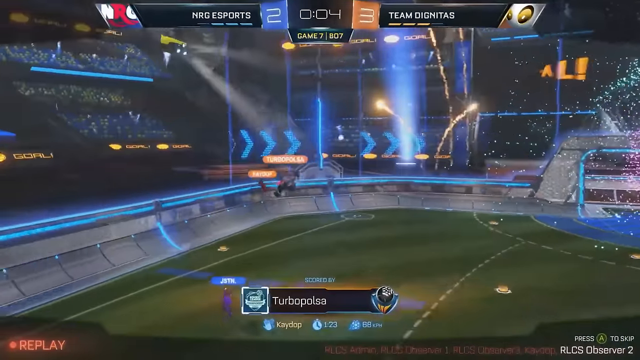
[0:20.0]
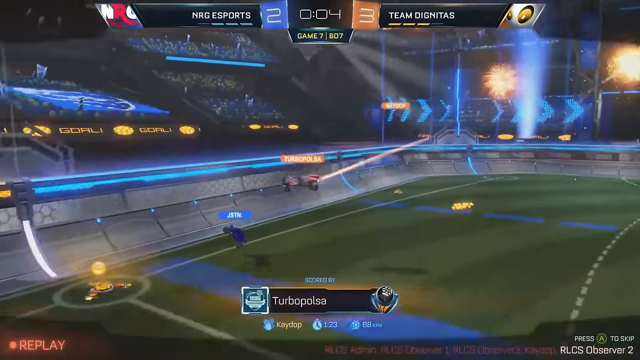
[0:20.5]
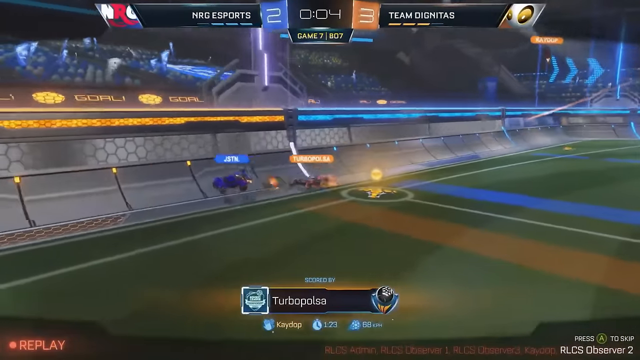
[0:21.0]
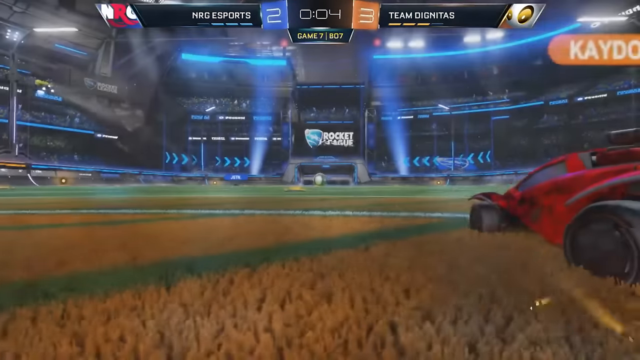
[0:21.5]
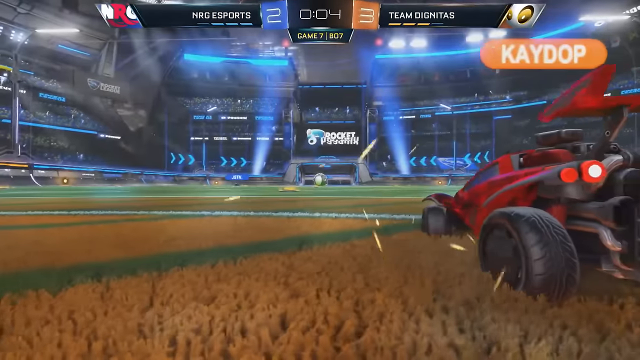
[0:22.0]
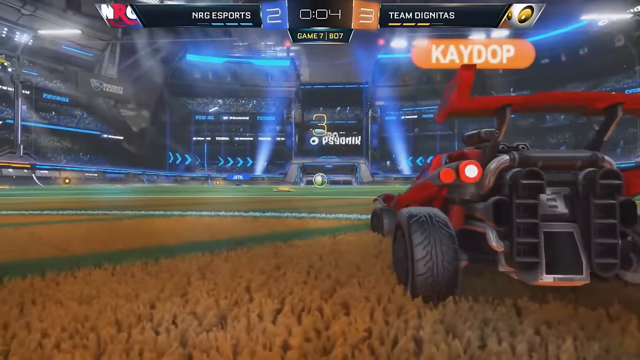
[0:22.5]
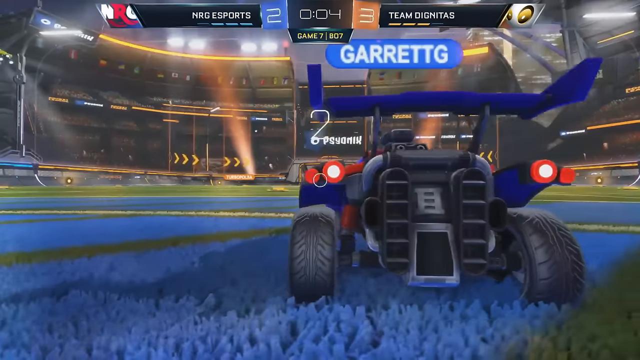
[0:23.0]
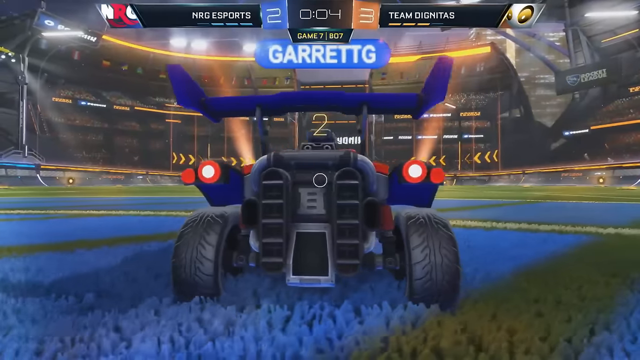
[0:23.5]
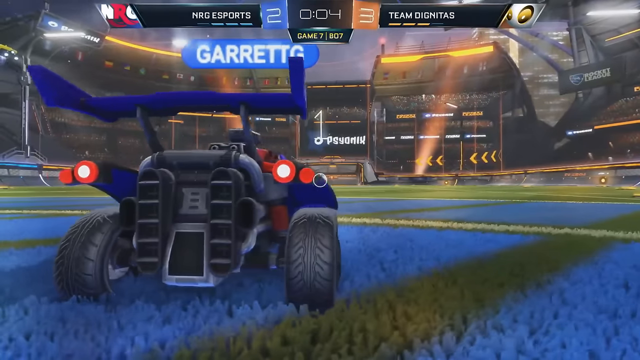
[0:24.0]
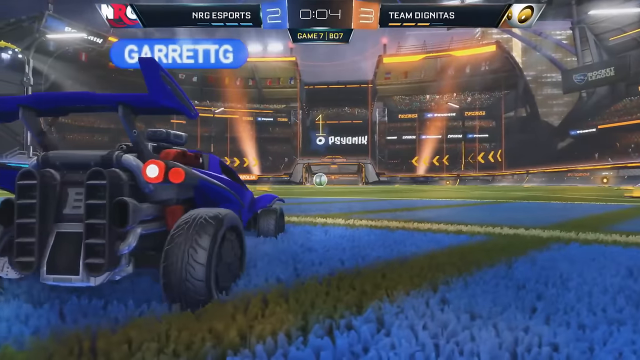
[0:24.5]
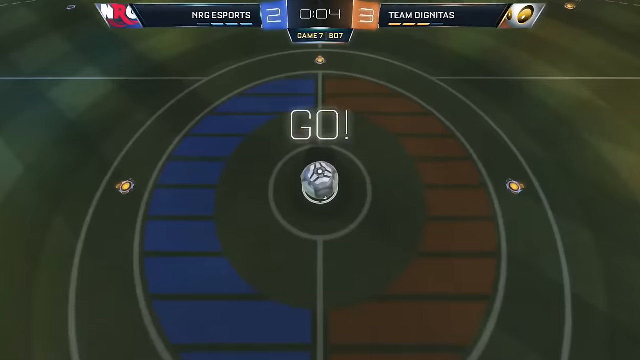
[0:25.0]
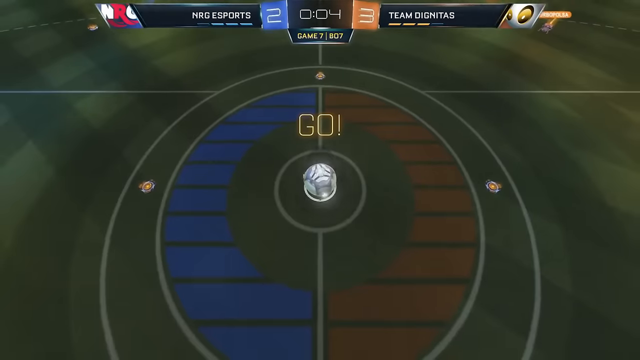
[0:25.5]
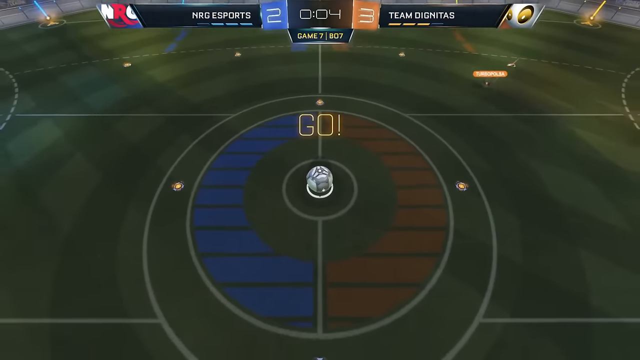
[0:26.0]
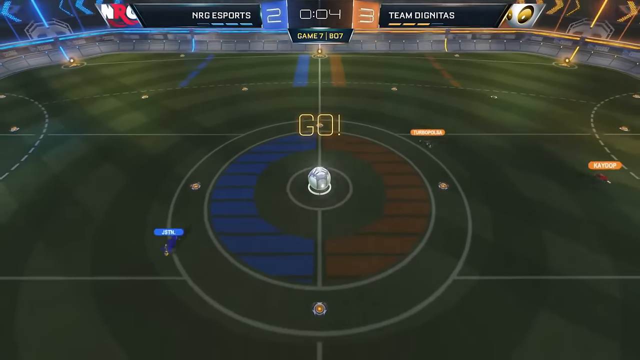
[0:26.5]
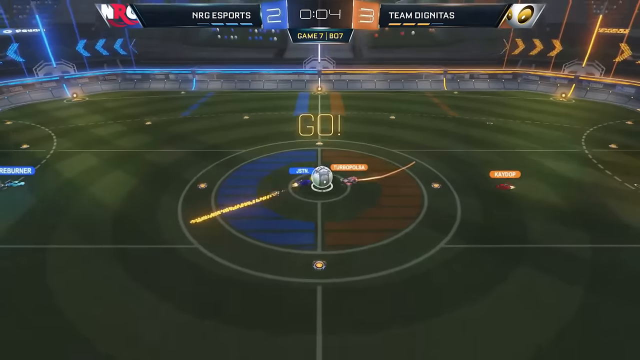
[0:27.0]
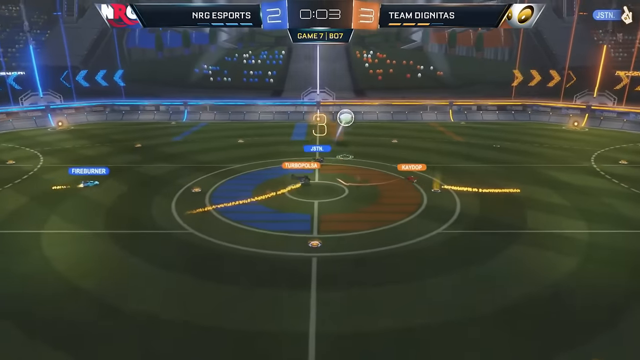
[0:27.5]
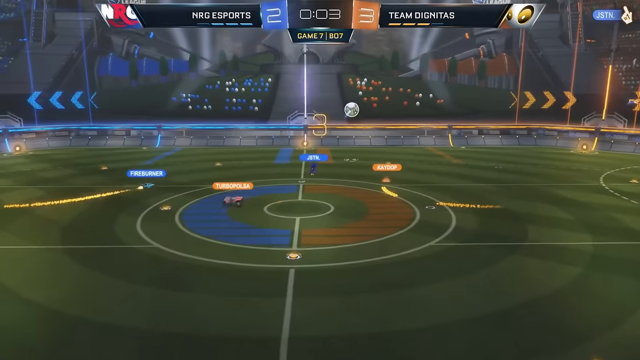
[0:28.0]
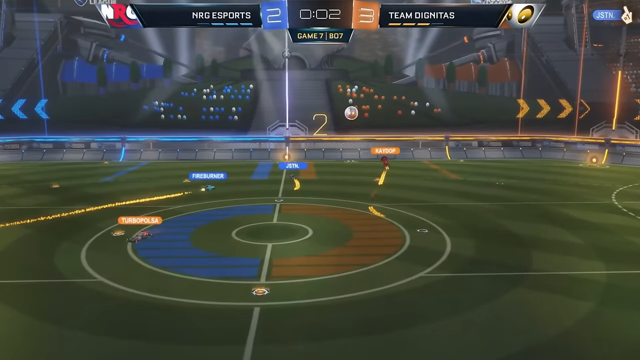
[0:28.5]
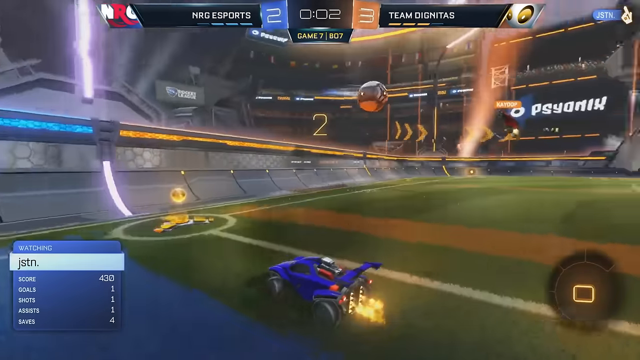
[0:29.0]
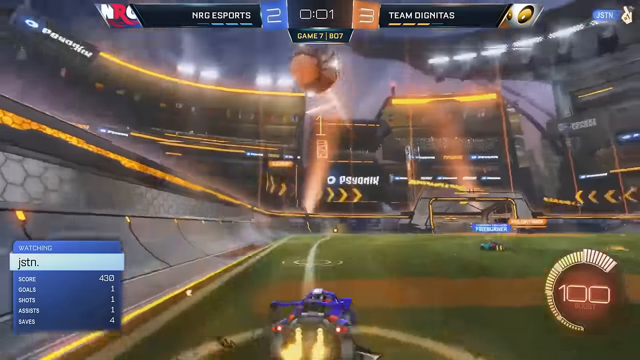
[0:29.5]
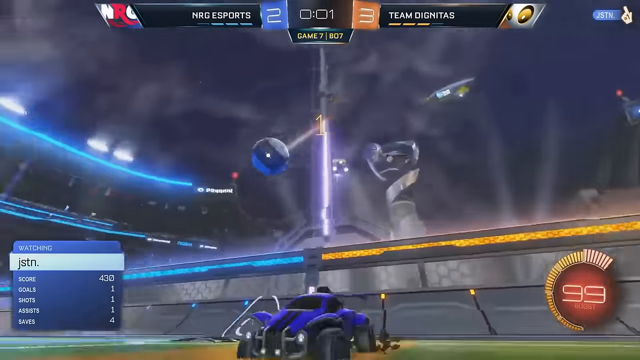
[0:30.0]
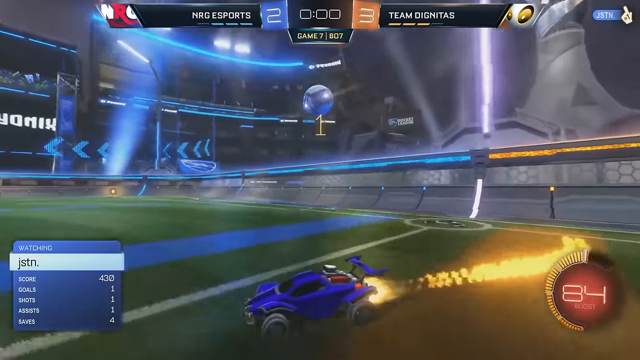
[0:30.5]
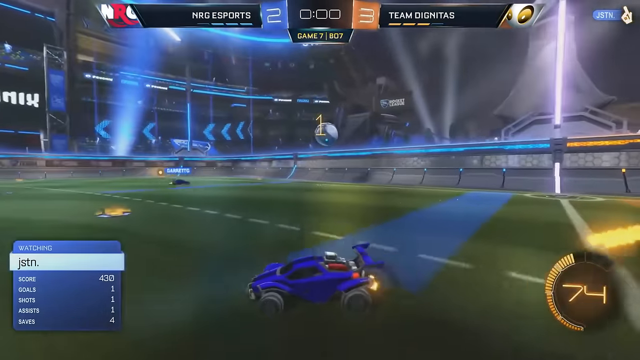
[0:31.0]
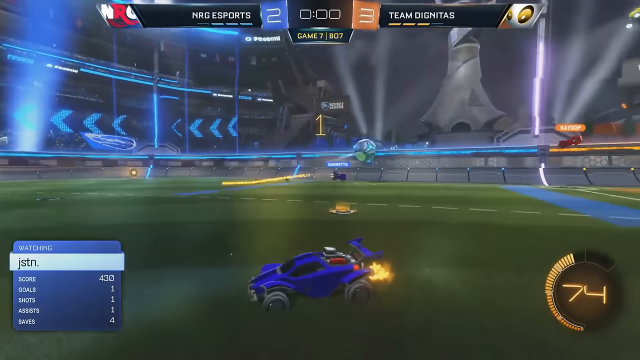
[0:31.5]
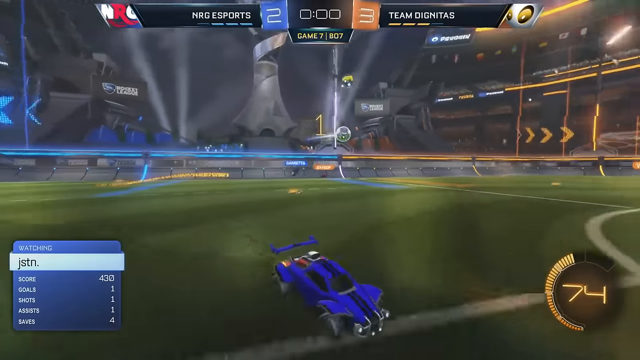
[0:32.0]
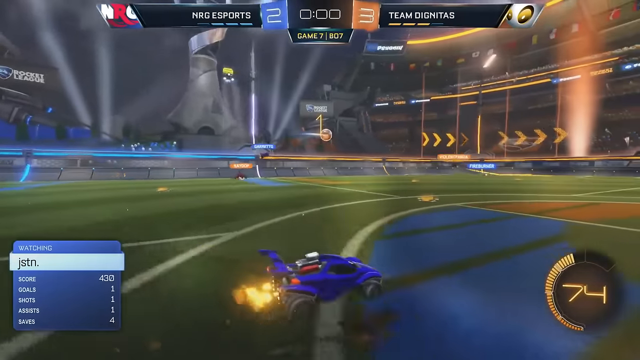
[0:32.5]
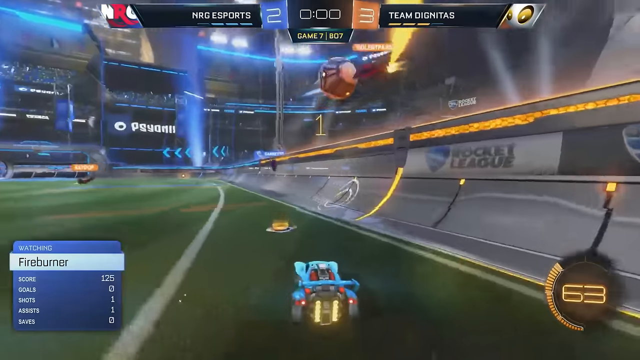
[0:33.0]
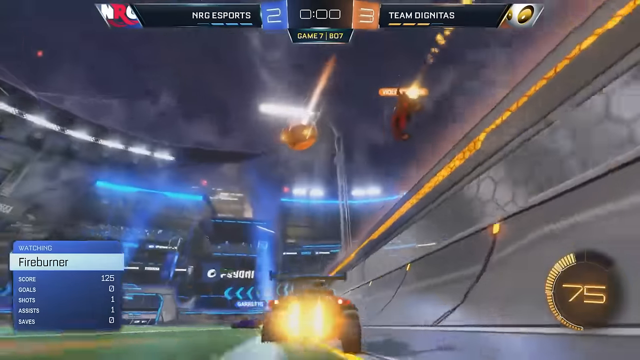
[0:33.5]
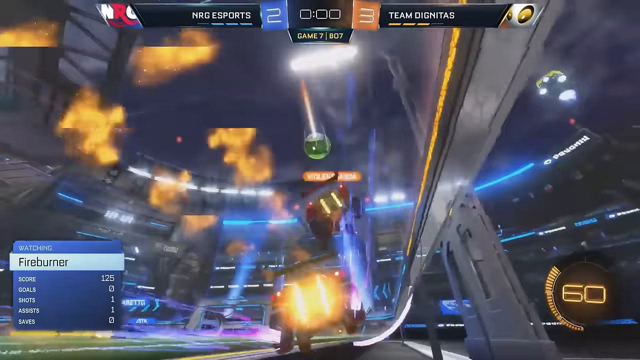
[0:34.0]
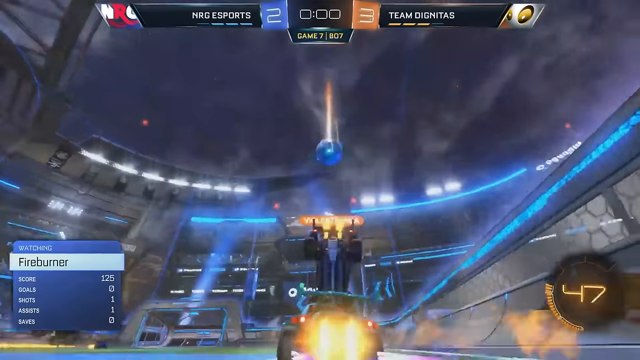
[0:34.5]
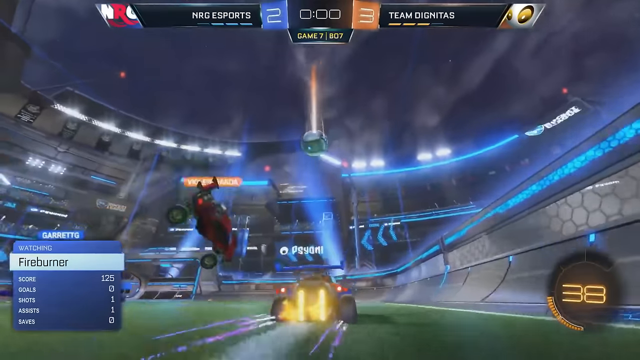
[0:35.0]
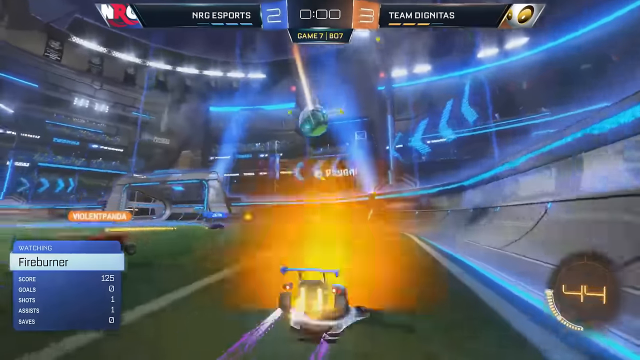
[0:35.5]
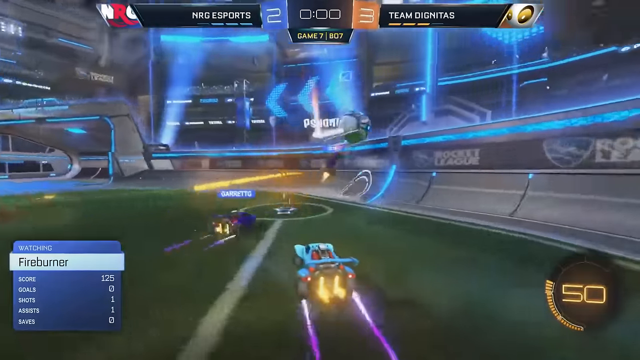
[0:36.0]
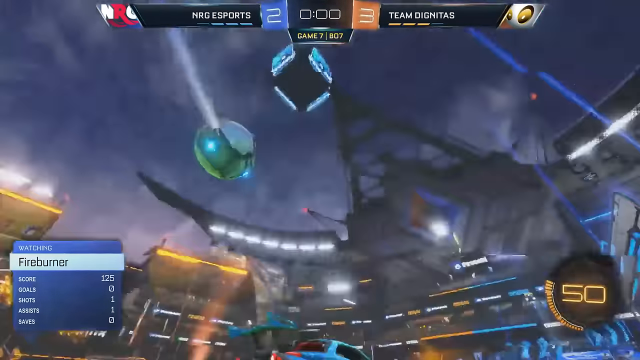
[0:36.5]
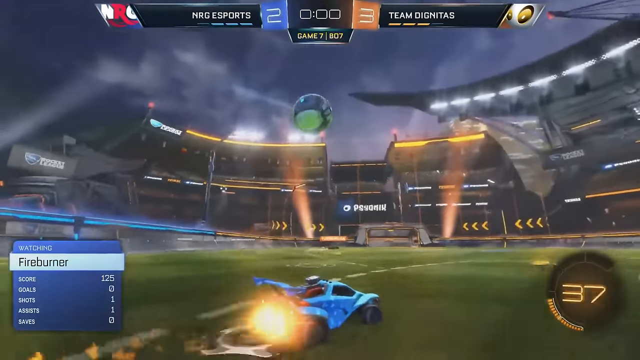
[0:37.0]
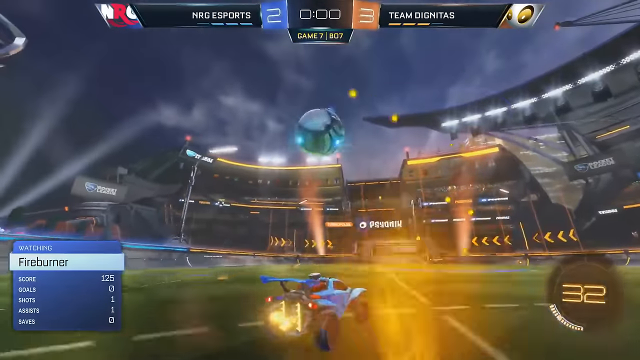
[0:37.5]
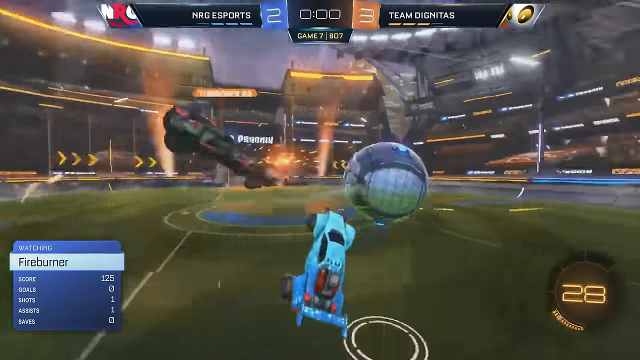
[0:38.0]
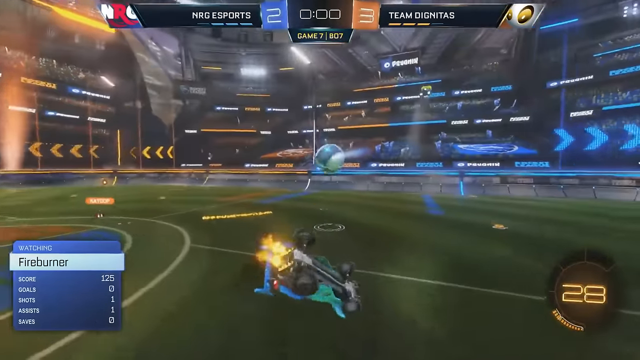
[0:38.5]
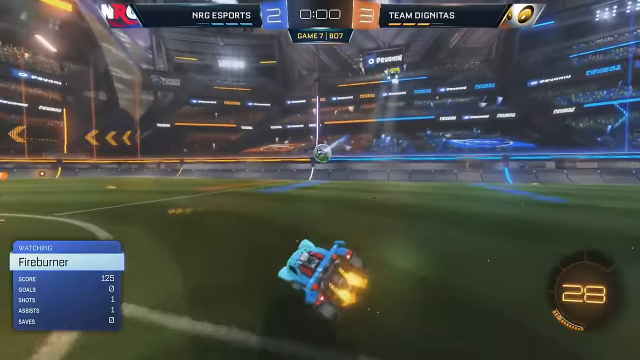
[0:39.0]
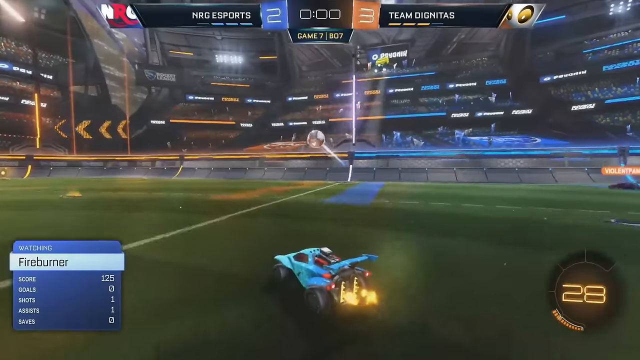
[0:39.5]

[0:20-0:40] The unidentified video game continues on what looks like a futuristic football field, with numerous glowing blue arrows in the background and lots of lights going off. At the bottom, the screen says "Turbo Pulsa." Many cars drive around the playing area with player tags flashing over them, and the cars hit each other. A glowing ball that appears to be in play floats in the air, occasionally hitting different barriers and bouncing around as the cars attempt to hit it. At one point the screen says "go" and then counts down "three two one" while the ball bounces around. The object of the game is unclear. Several cars hit the barriers and tip over, but they right themselves and continue playing. All the vehicles move very quickly, chasing the ball as it floats in the air and occasionally bounces off the ground or the barriers at the side. A timer in a circle at the bottom right-hand corner keeps changing.